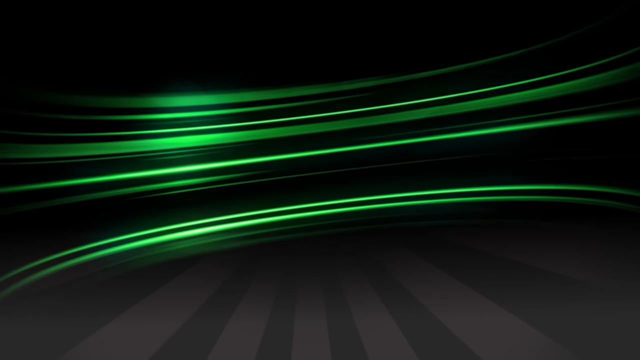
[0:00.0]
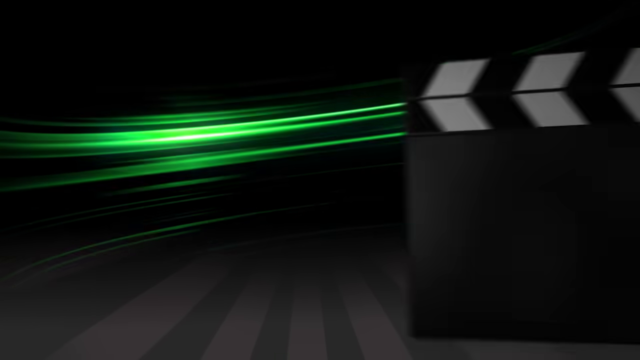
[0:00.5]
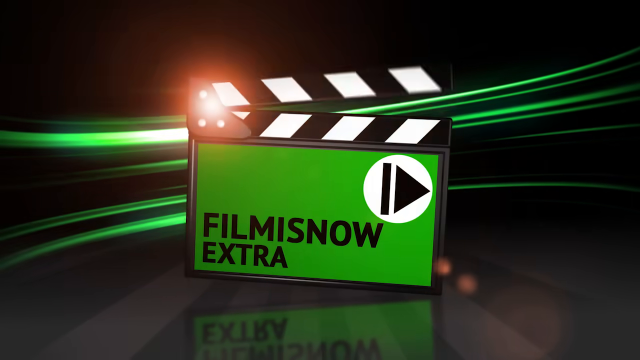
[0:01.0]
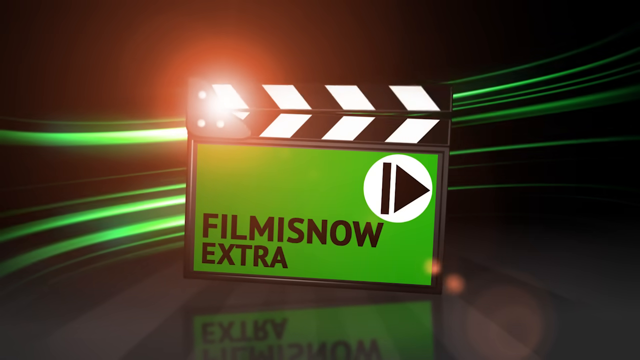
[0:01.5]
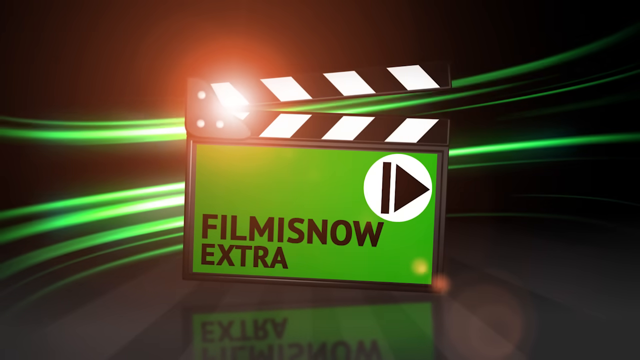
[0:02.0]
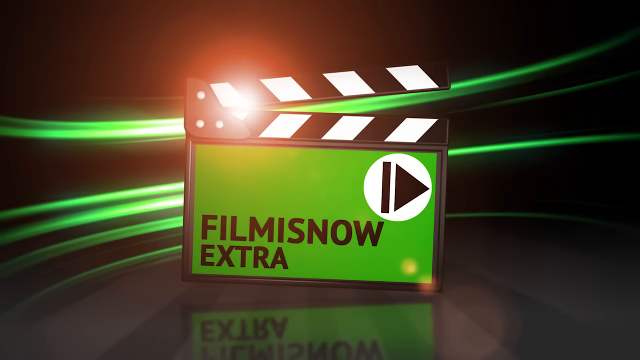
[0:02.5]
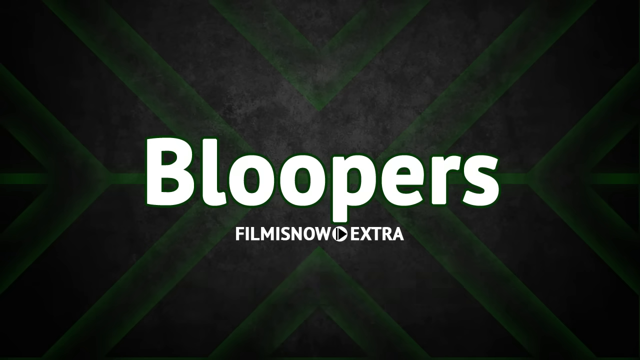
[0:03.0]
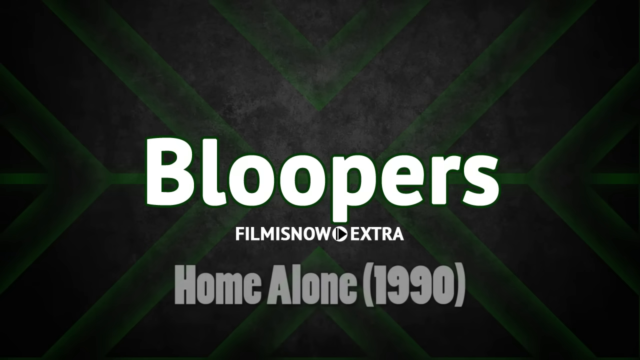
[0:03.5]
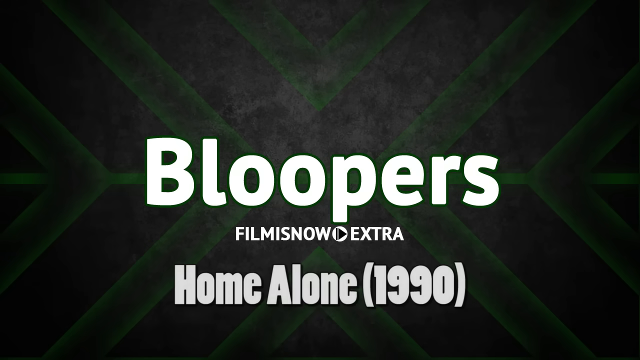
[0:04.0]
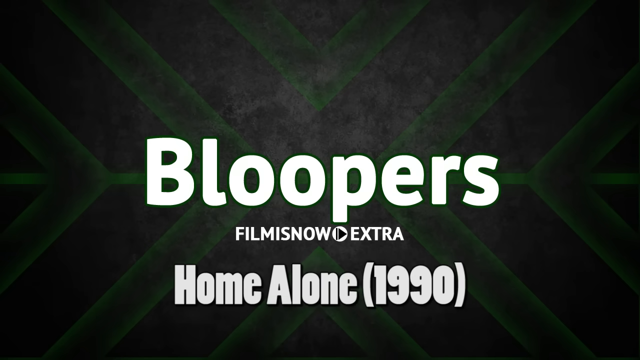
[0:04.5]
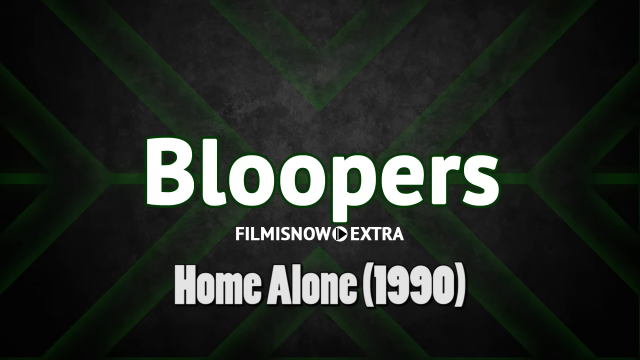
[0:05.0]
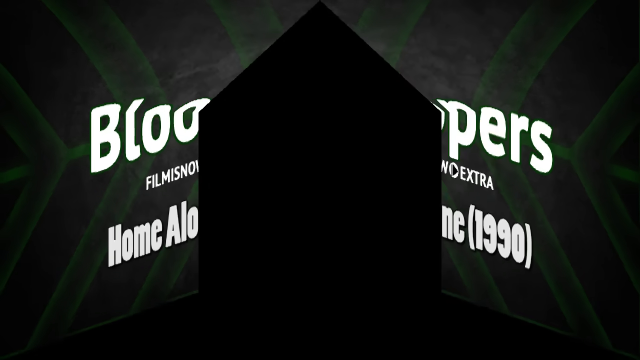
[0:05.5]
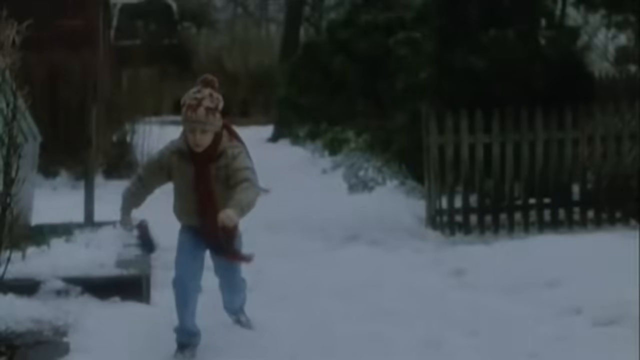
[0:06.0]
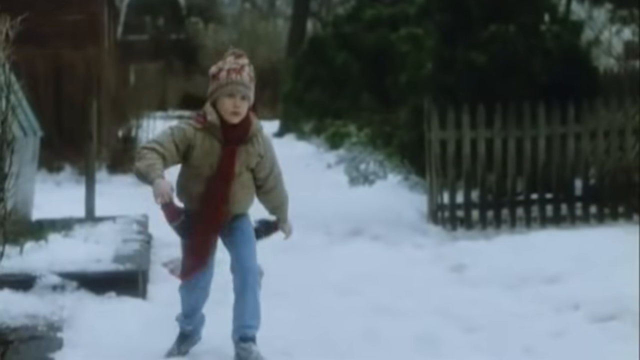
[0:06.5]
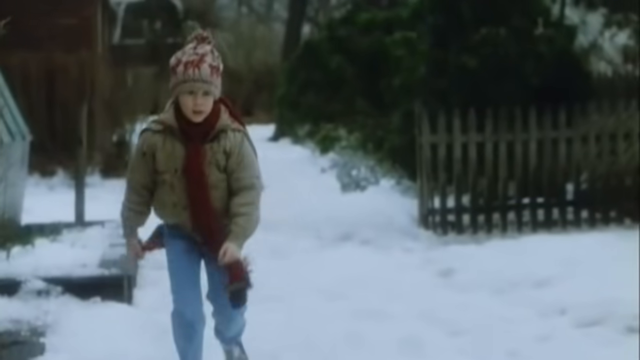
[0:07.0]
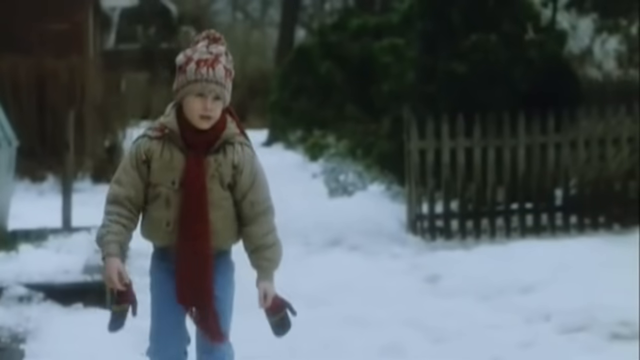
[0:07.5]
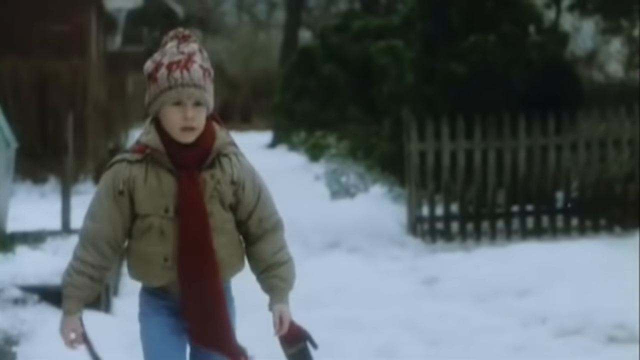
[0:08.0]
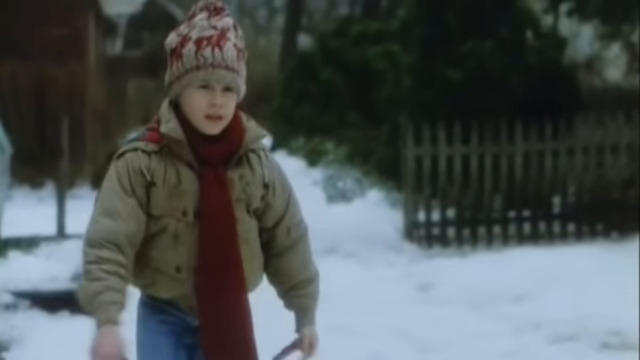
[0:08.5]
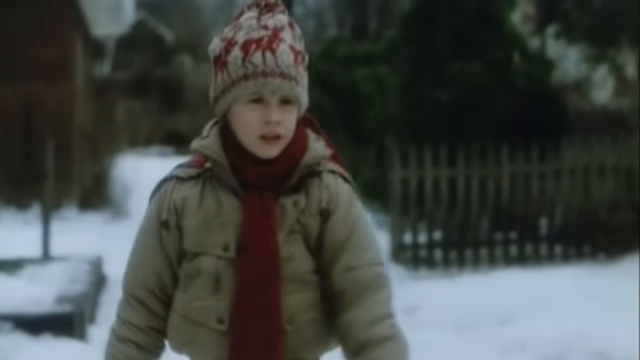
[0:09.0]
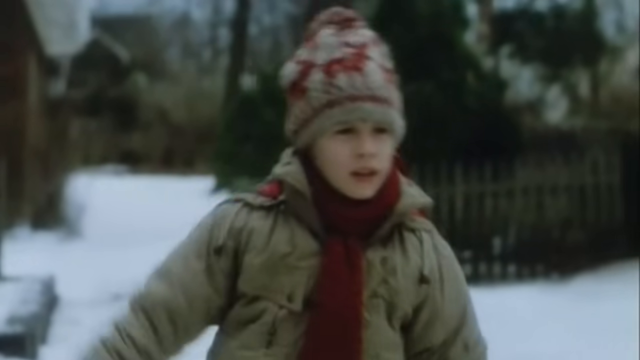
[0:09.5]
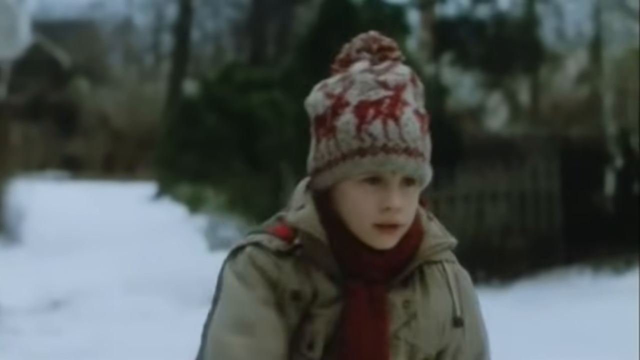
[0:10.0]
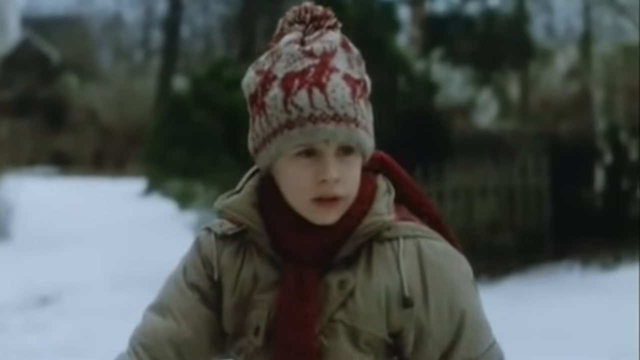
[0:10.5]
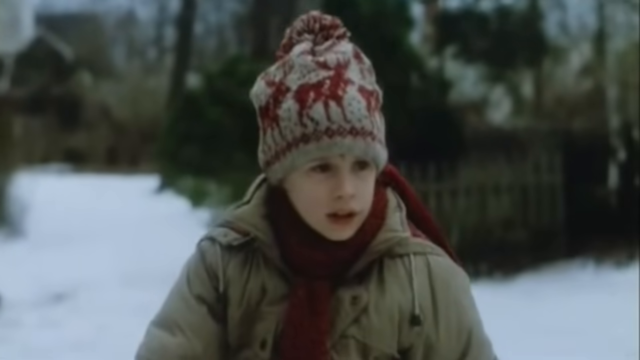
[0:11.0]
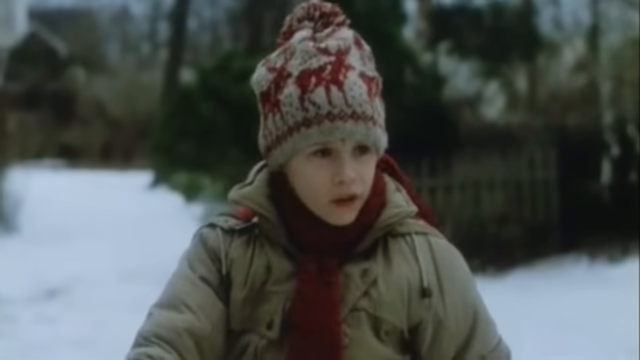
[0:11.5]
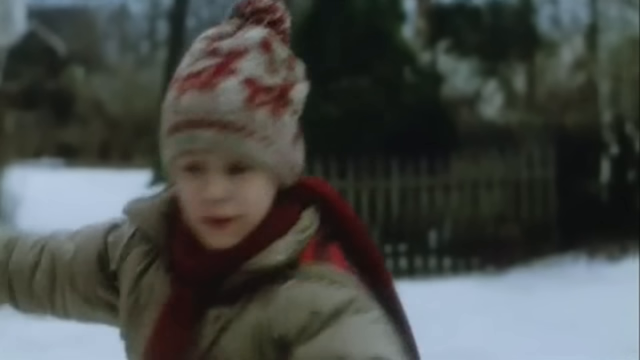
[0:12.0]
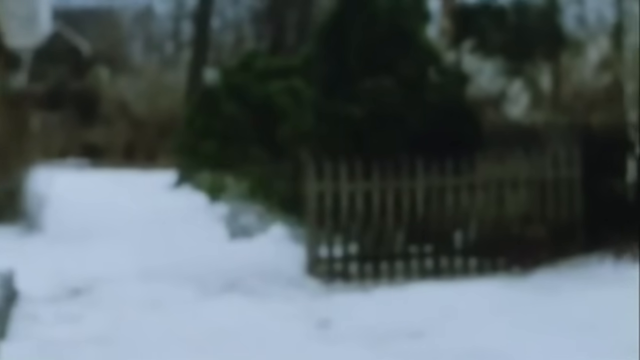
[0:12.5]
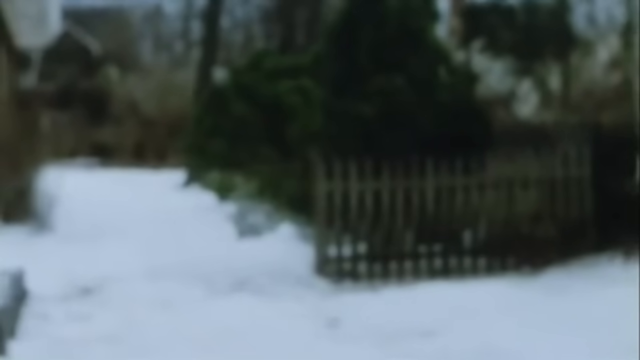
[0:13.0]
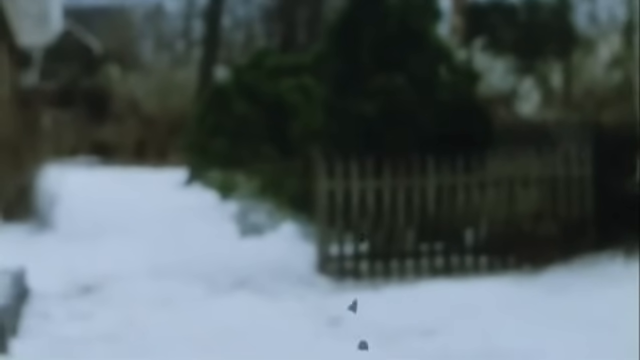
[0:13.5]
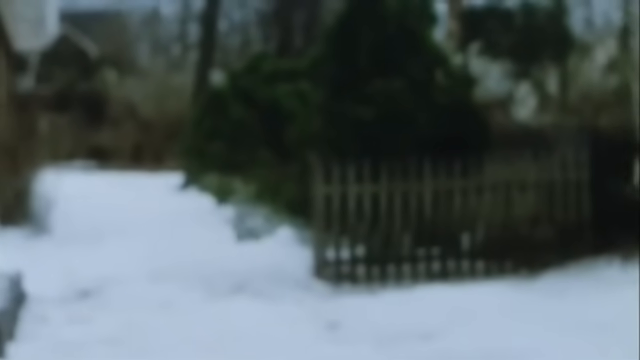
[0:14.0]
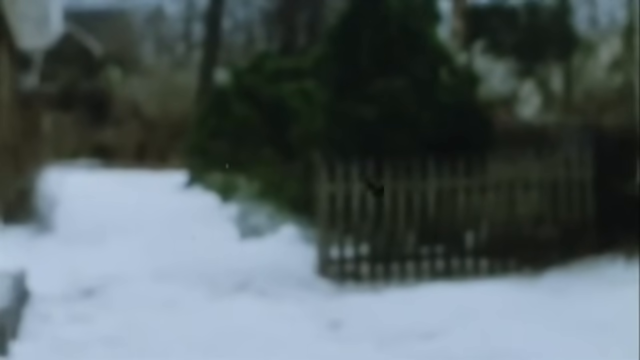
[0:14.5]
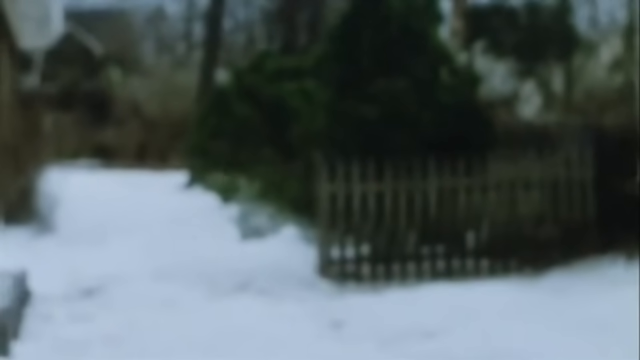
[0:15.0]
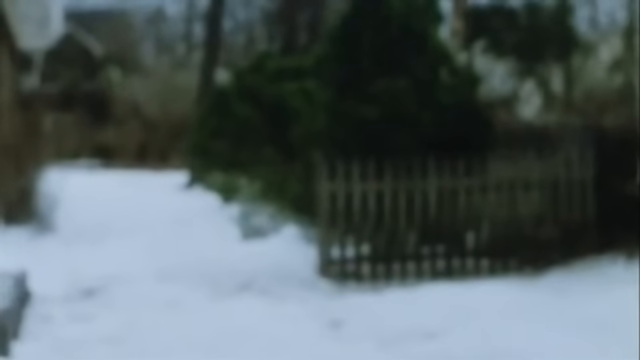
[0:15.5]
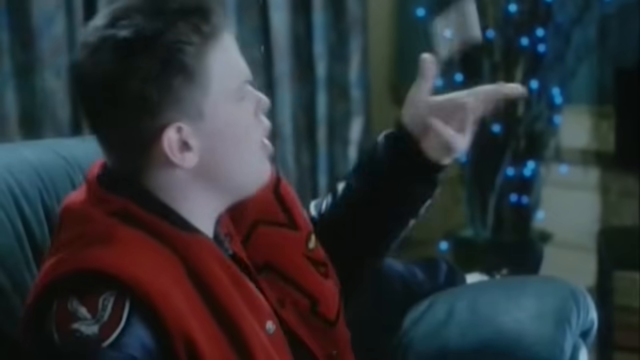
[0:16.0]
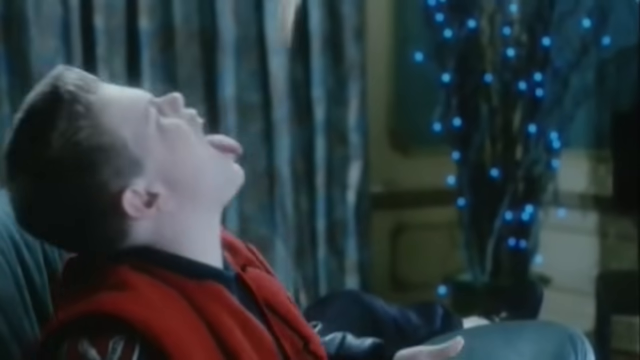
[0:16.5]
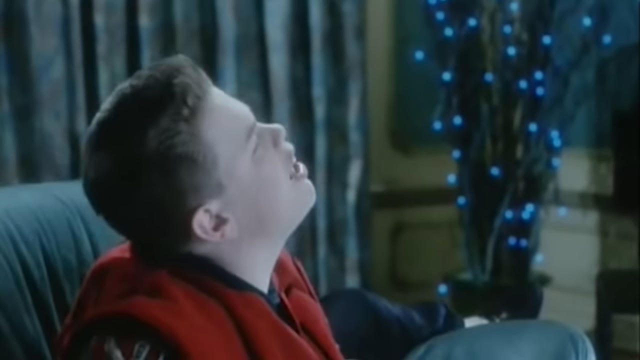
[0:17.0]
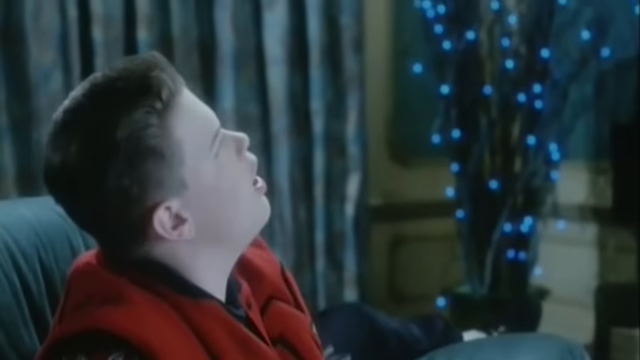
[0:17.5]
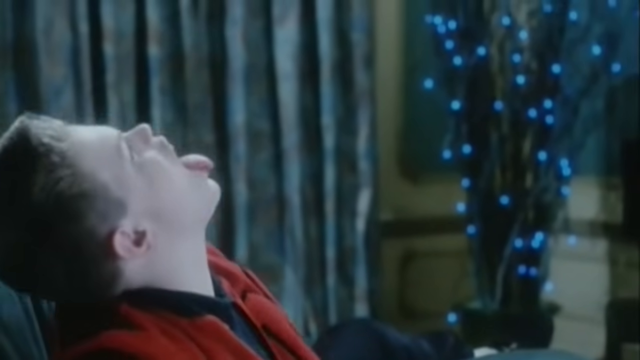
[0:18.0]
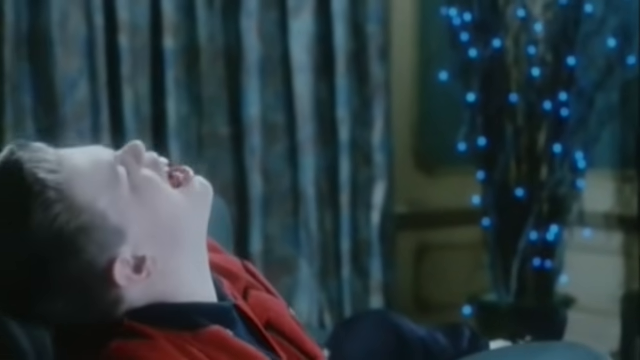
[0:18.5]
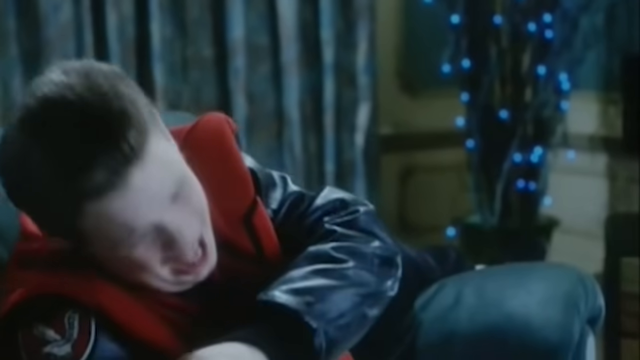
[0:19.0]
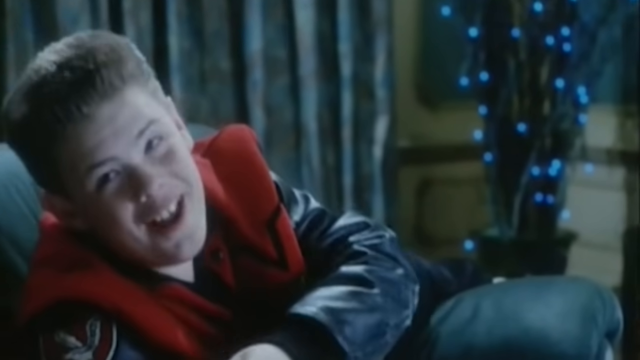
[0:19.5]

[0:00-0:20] The video opens on a black background with text that includes "bloopers", and Home Alone 1990 is shown. Kevin walks down a snowy alley and appears to be getting something. He has a red scarf, a shirt and a cape. Another guy who lives in this house throws popcorn on top of him. On the right is a tree with blue particles, and a curtain is in the background. The guy misses and hits his face; he doesn't hit the target with his foot. It is winter outside, with snow on the ground and some wooden gates. There is a stag on Kevin's head.